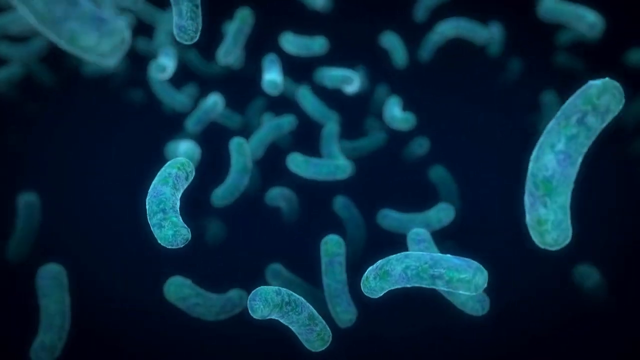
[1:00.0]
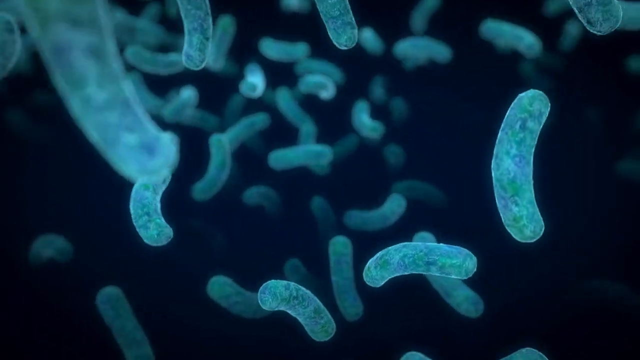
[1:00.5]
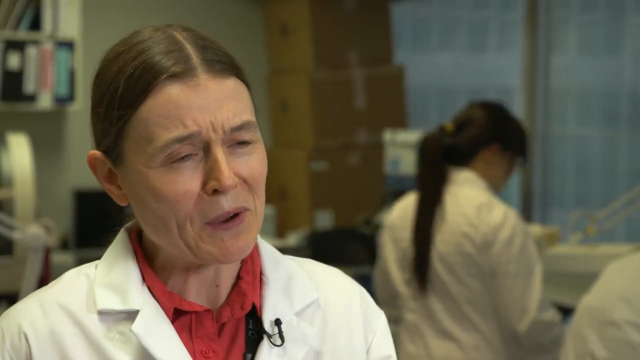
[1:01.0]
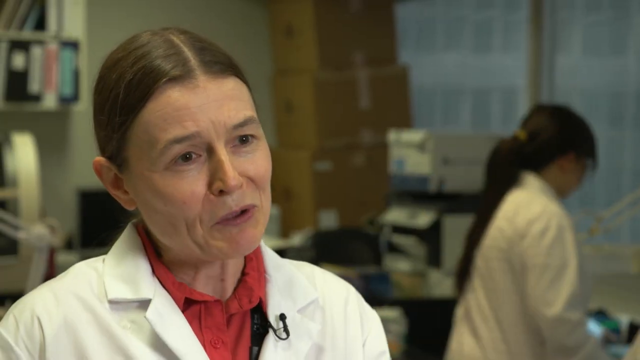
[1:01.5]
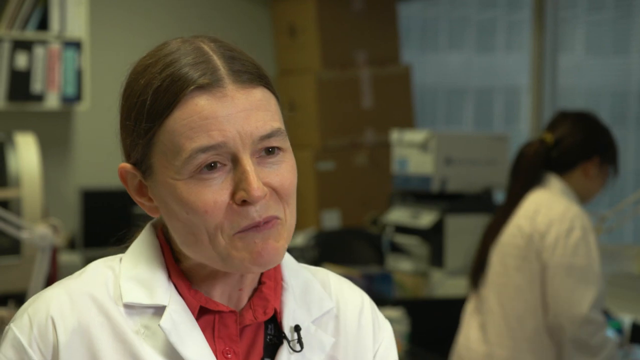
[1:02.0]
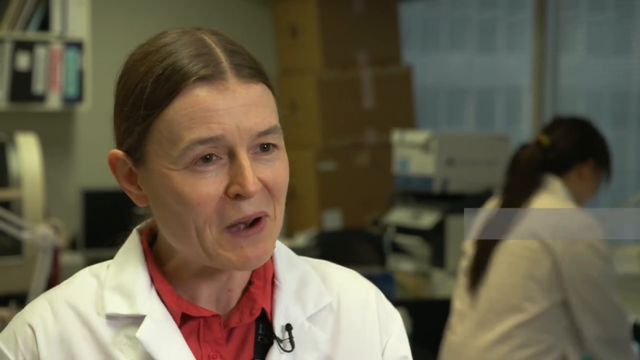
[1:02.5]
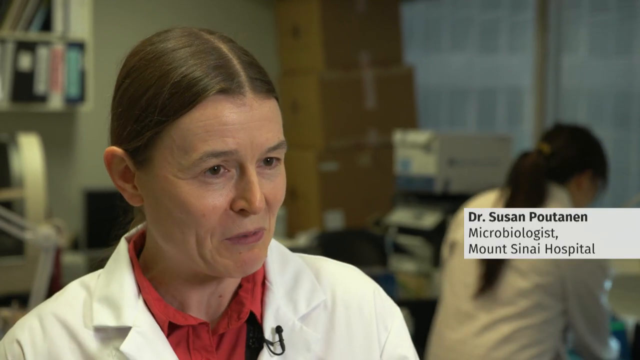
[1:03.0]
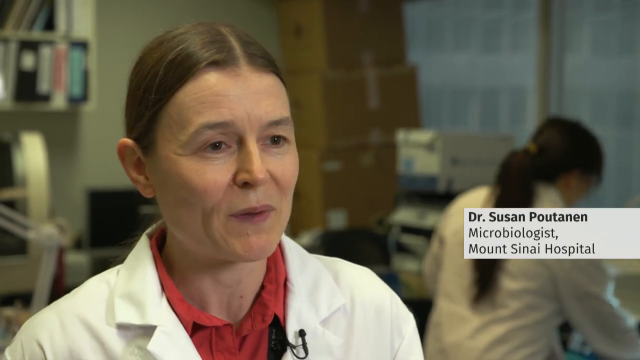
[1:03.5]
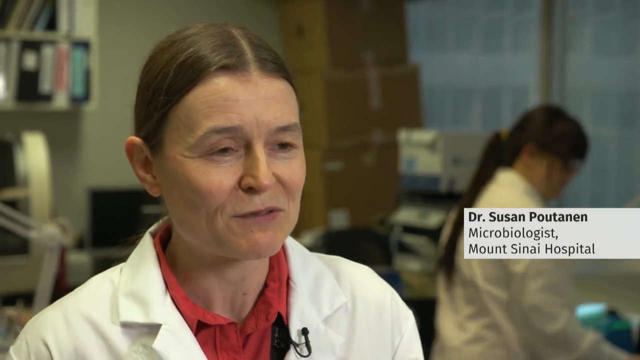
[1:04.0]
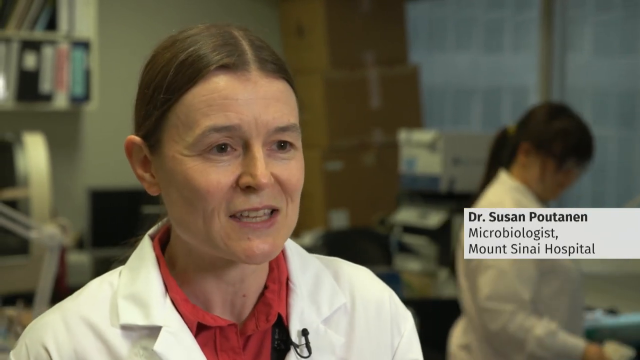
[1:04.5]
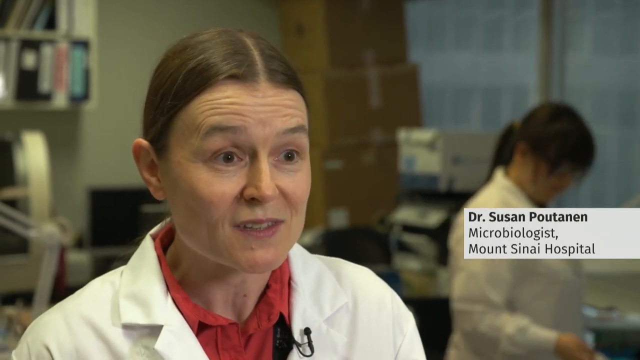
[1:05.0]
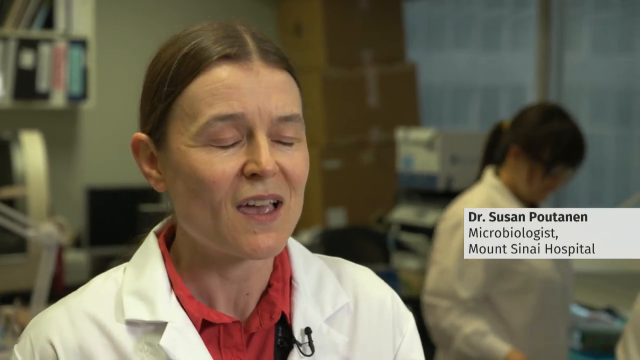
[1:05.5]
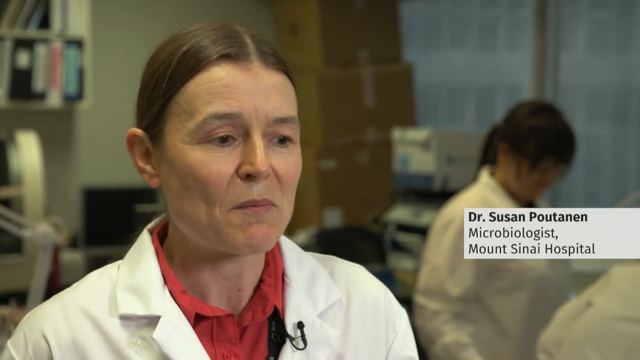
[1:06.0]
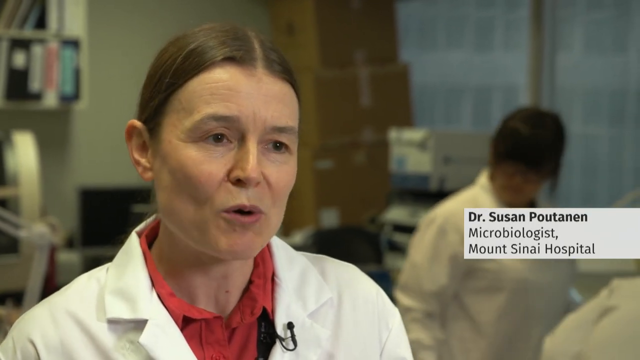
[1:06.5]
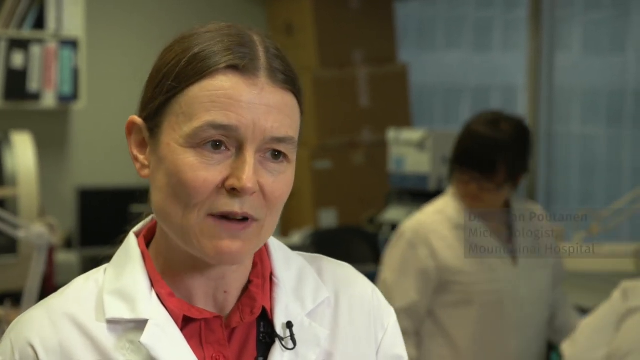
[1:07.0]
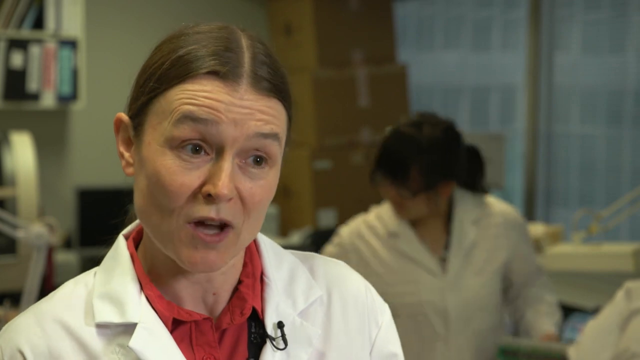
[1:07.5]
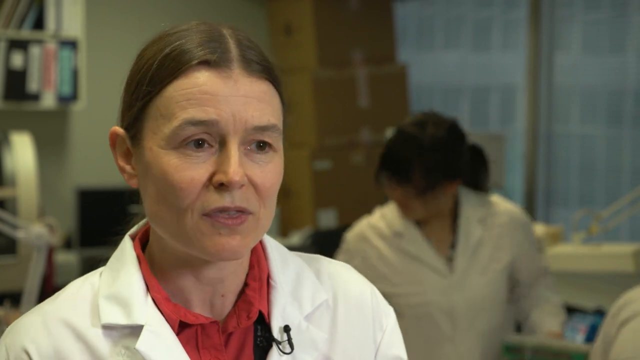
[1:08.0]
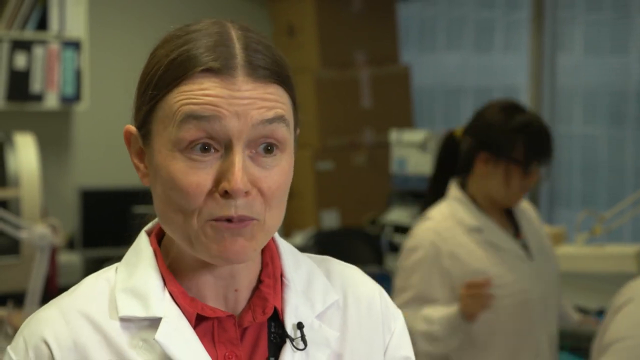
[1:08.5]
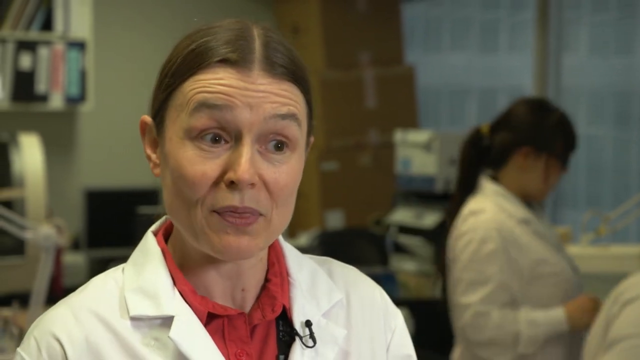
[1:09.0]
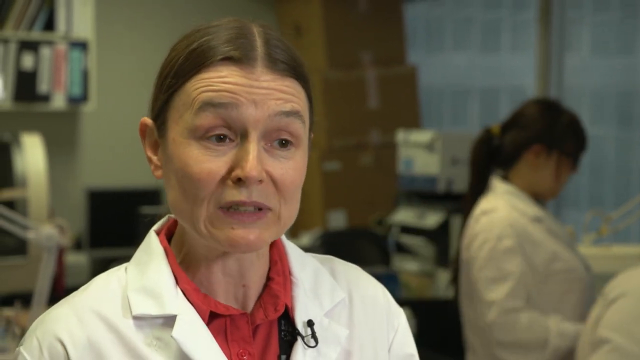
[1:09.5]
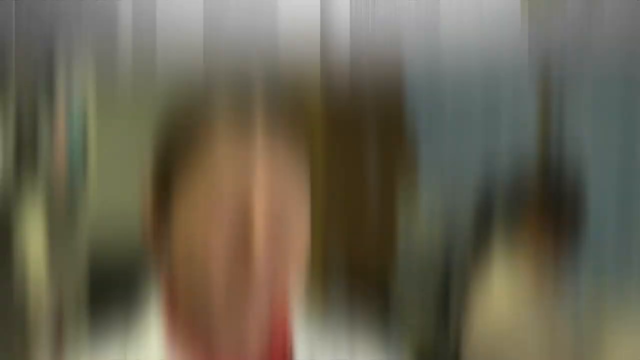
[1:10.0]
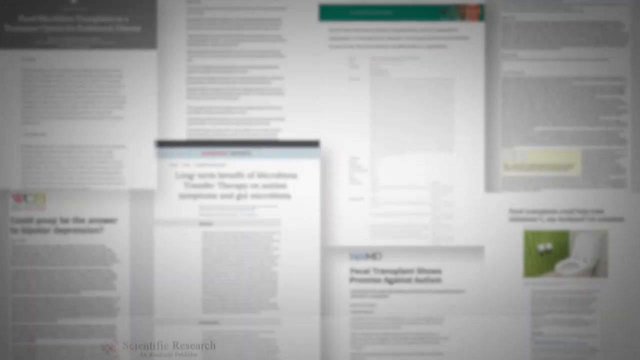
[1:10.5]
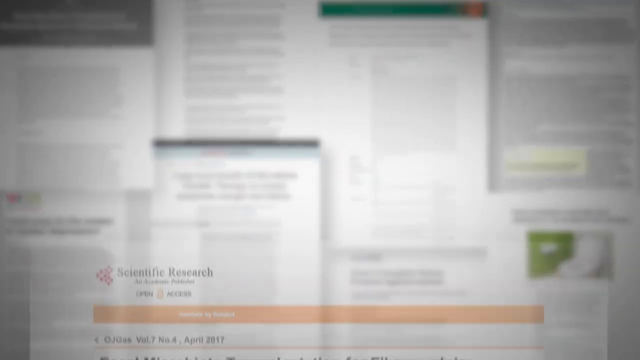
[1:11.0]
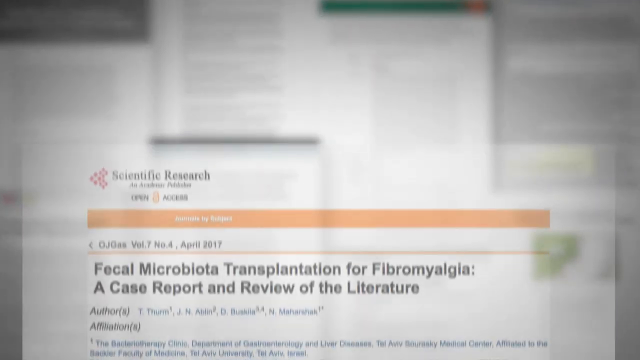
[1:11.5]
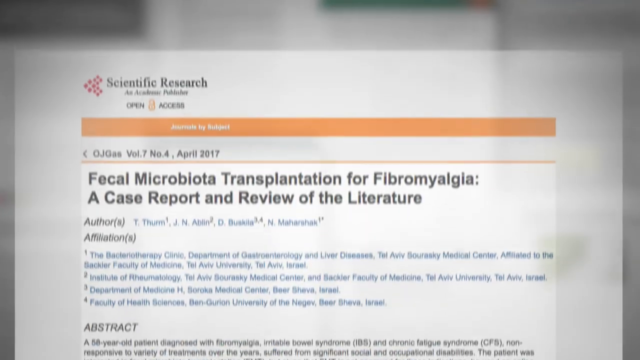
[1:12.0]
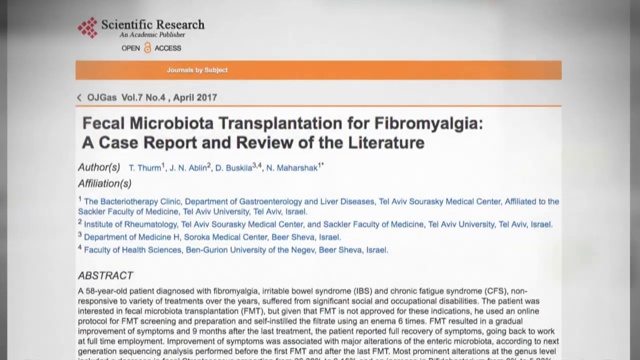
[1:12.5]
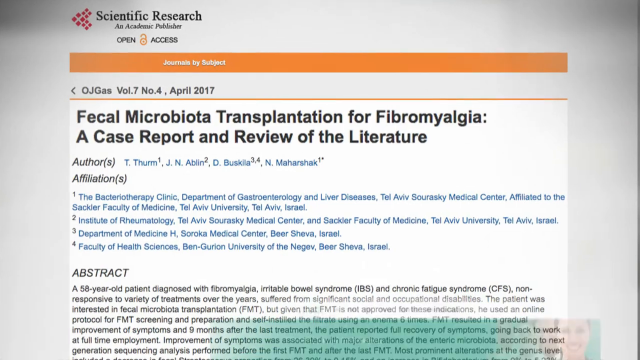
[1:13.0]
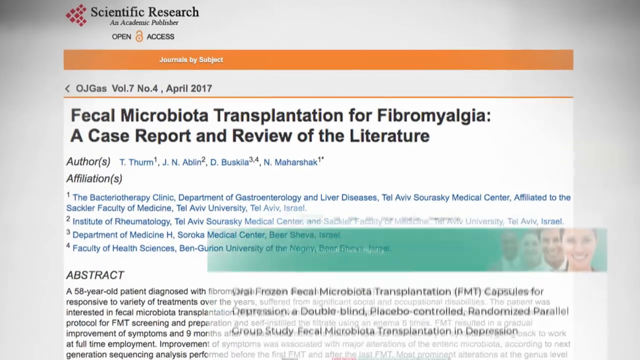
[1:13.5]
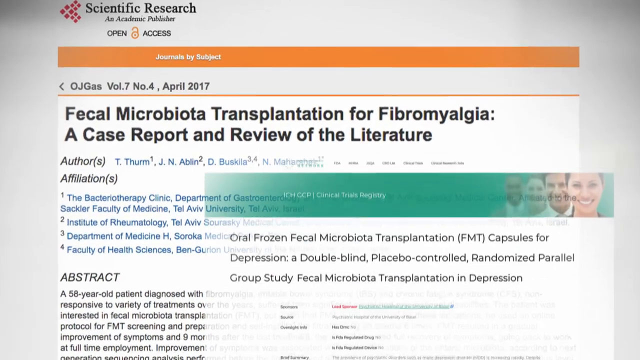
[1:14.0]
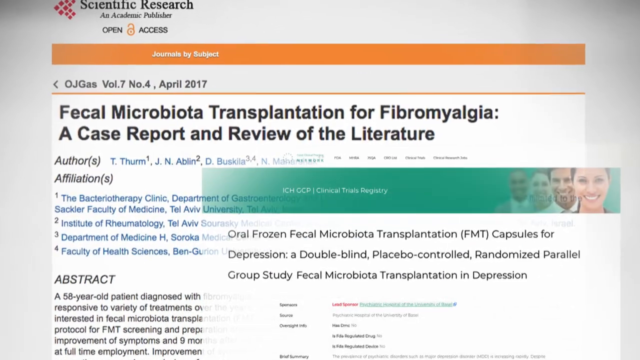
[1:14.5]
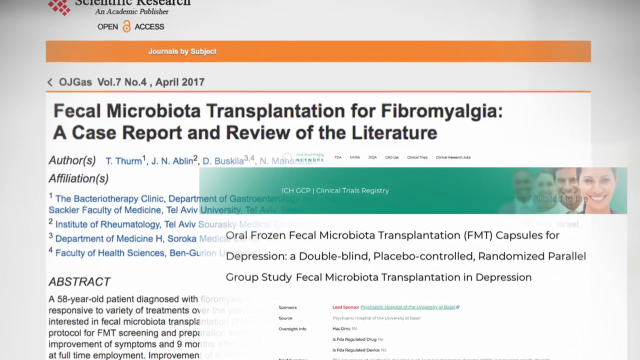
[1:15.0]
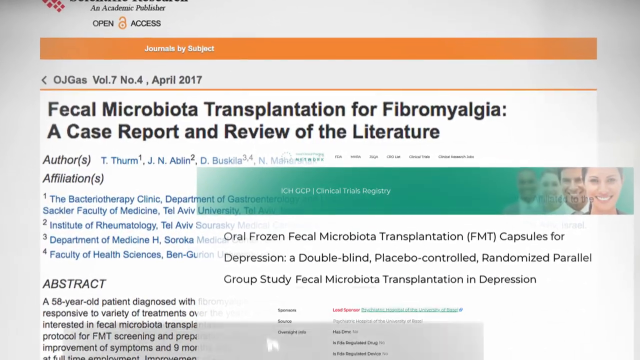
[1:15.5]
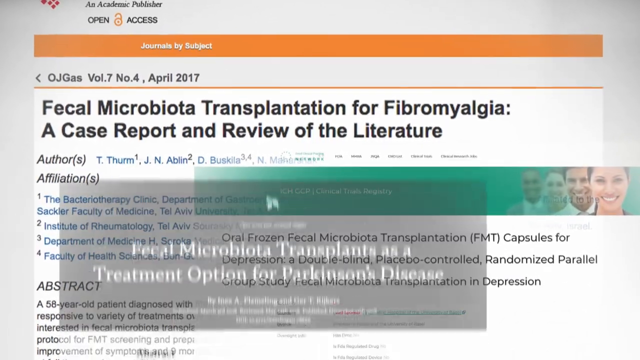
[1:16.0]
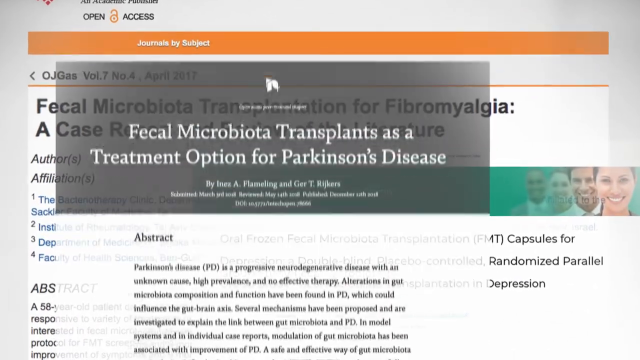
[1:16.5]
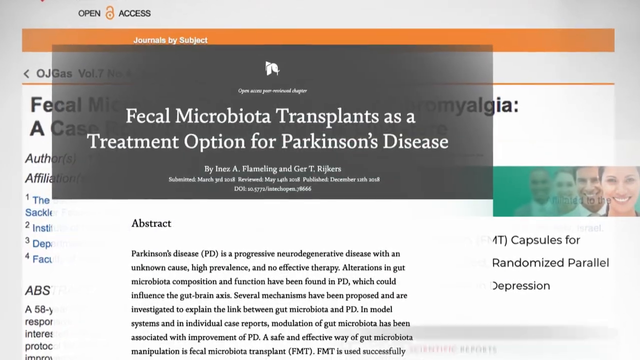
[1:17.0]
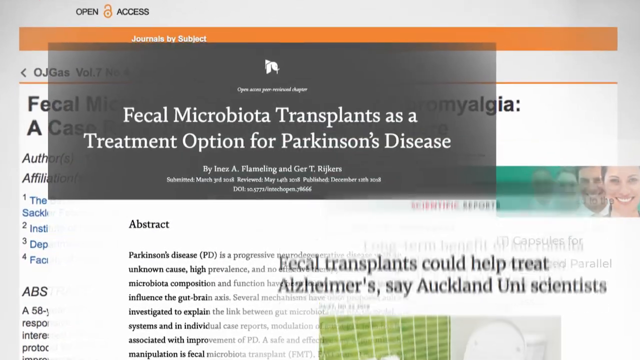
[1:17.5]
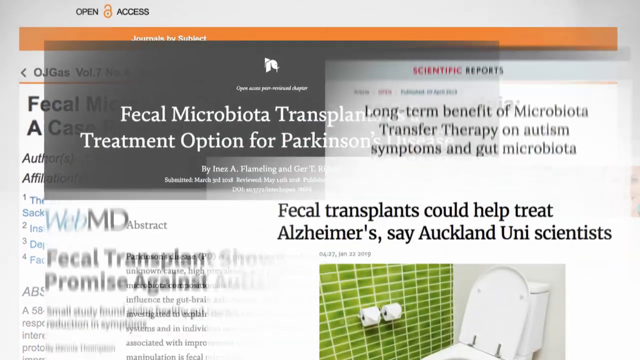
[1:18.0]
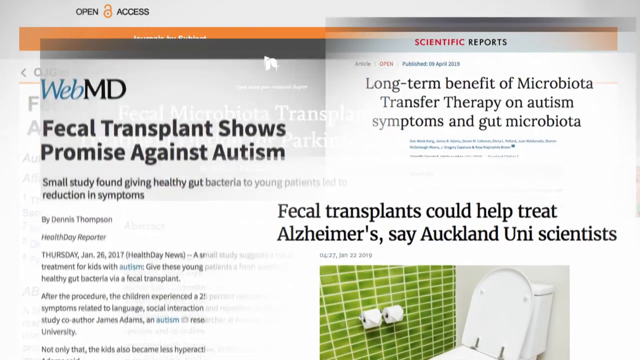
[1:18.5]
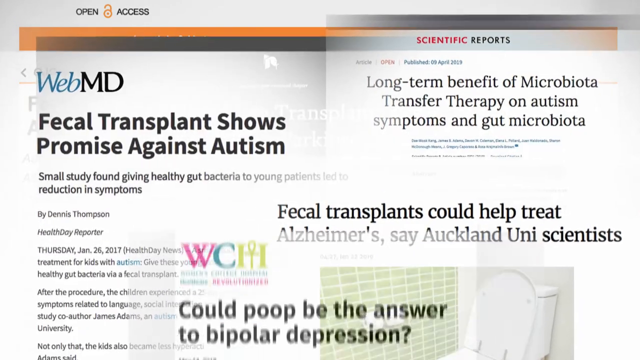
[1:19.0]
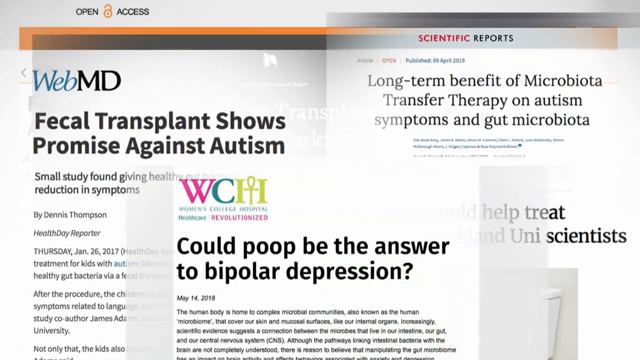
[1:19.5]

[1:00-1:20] Oval, Wotsit-shaped luminous blue bacteria cells float around on the black background. Then a different doctor appears, wearing white overalls with a pink shirt underneath, with a microphone attached to her left collar, speaking towards the camera. In the background are some boxes, a window, a shelf with some books, a computer, and another doctor in the back right with long brown hair, gloves and a white overall, facing away from the camera. The interviewed doctor looks off to her left and the viewer's right towards the interviewer, talking quite expressively, slightly smiling and nodding her head as she talks. A white text box appears with black text reading "Dr. Susan Putanen, microbiologist, Mount Sinai Hospital". She moves her eyebrows up and down several times as she talks, nodding and slightly tilting her head to the left. The video then shows a scientific research paper on a white background titled "Fecal Microbiota Transplantation for Fibromyalgia, a case report and review of the literature", with a list of the authors in blue, where they work also in blue, and part of the abstract at the bottom of the screen in black text. A different article slightly overlaps it in the right middle of the screen, reading "Oral Frozen Fecal Microbiota Transplantation, FMT, Capsules for Depression, a double-blind, placebo-controlled, randomized, parallel group study, fecal microbiota transplantation in depression". This one is also white but has a green rectangular border at the top, which seems to be some kind of logo and says "ICH GCP Clinical Trials Registry", with pictures of some generic people smiling on the right-hand side of that border. A third overlapping article follows: its top third has a transparent black background with white text and its bottom two-thirds a white background with black text. Its title is "Fecal Microbiota Transplants as a Treatment Option for Parkinson's Disease", with an abstract at the bottom. Four more studies then pop up in quick succession, all with white backgrounds and black text; their subject matter all seems to be fecal transplant and microbiota transfer therapy, and one says "could poop be the answer to bipolar depression".